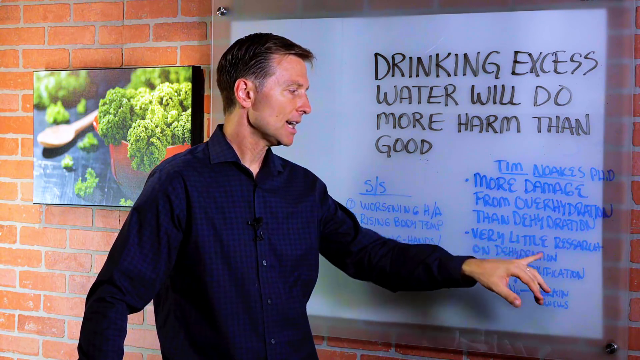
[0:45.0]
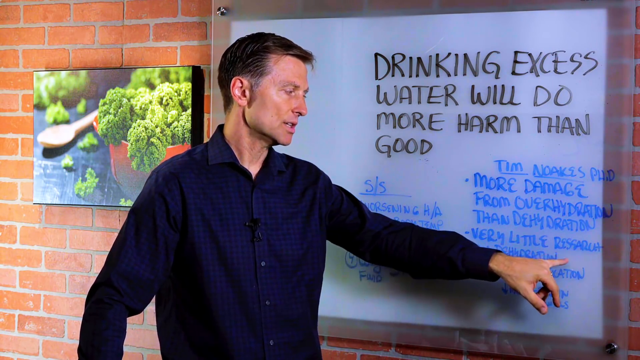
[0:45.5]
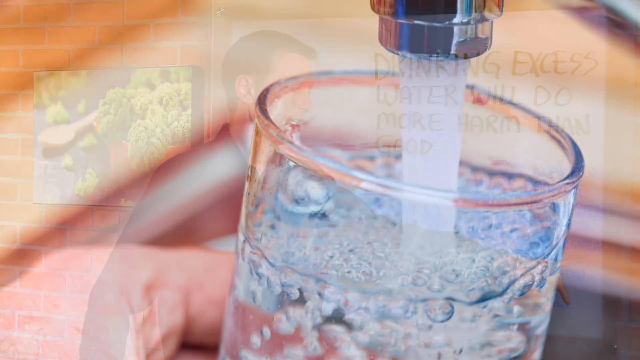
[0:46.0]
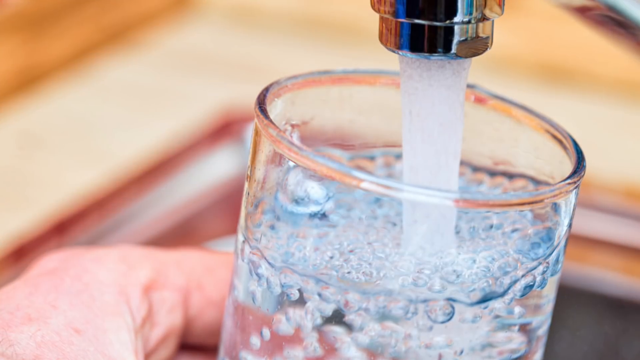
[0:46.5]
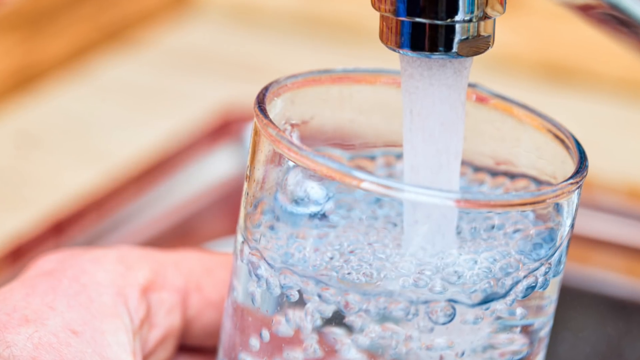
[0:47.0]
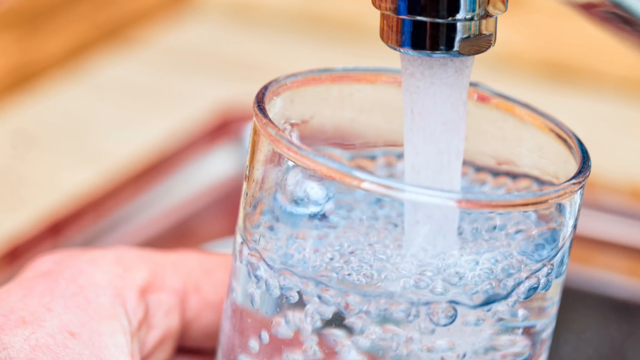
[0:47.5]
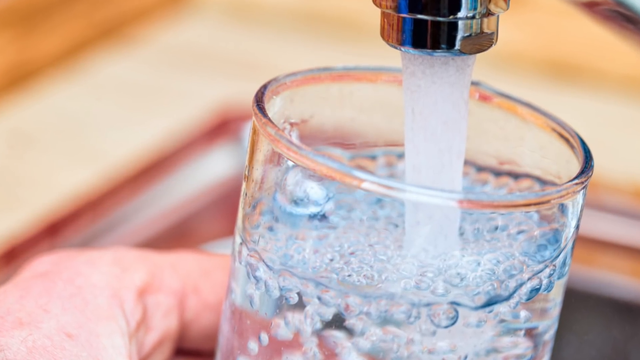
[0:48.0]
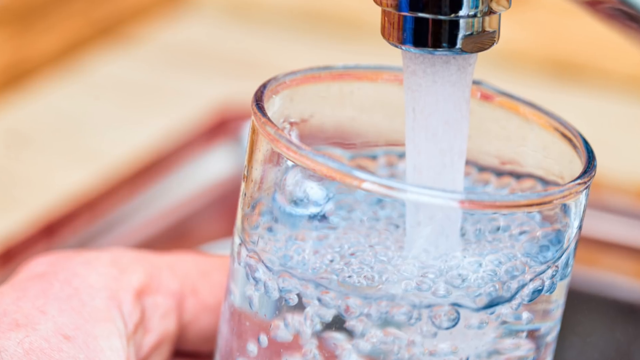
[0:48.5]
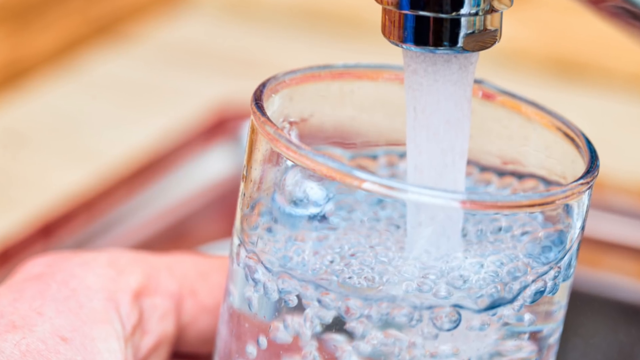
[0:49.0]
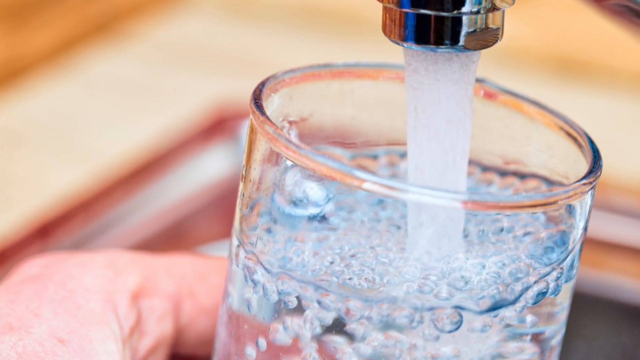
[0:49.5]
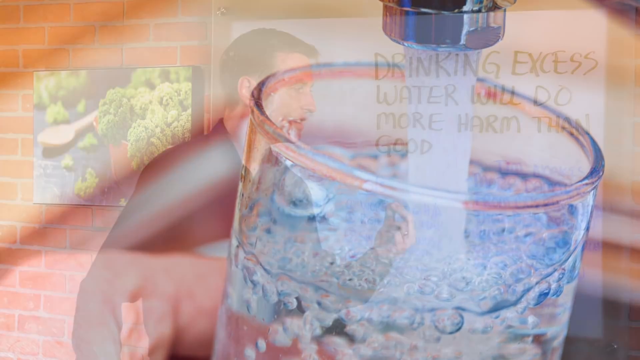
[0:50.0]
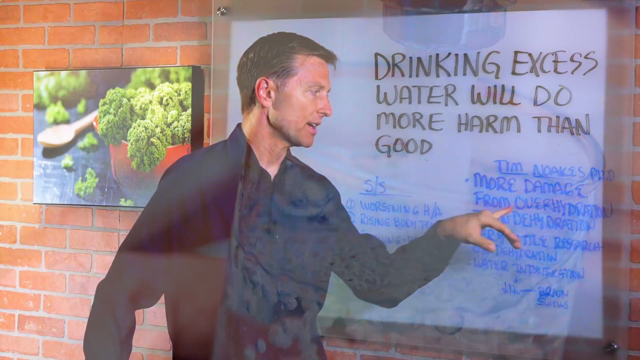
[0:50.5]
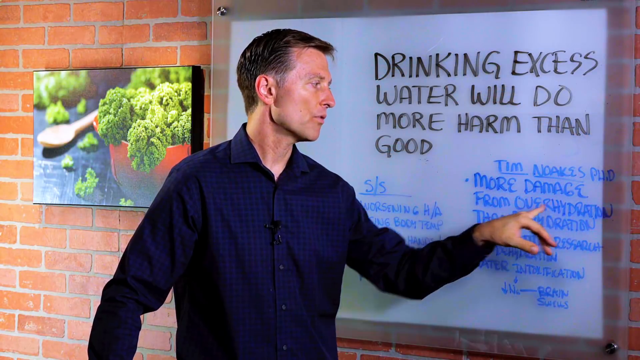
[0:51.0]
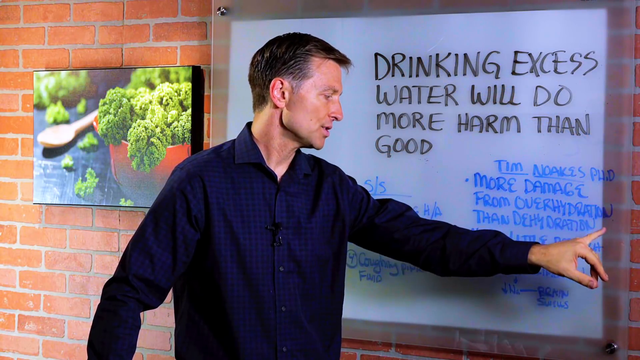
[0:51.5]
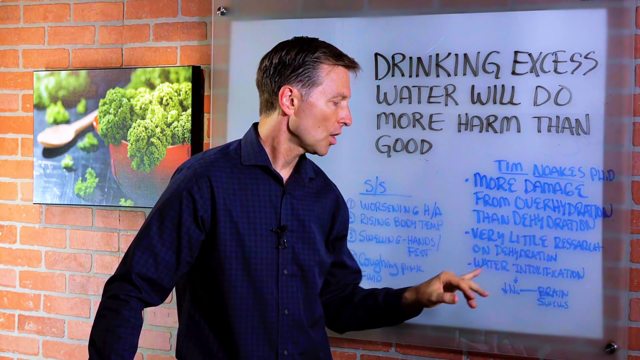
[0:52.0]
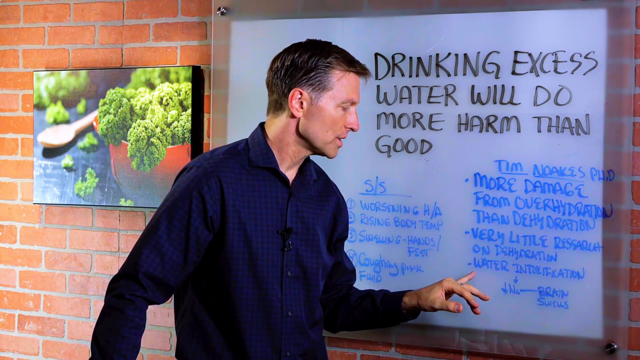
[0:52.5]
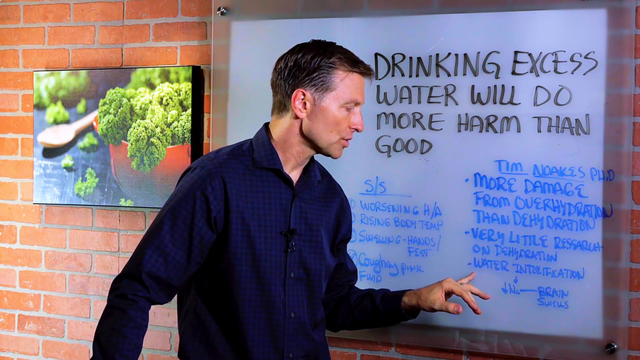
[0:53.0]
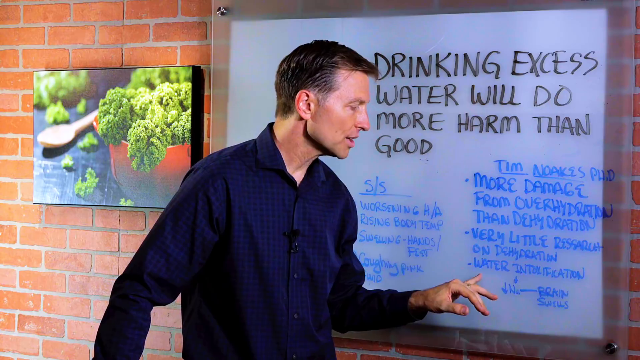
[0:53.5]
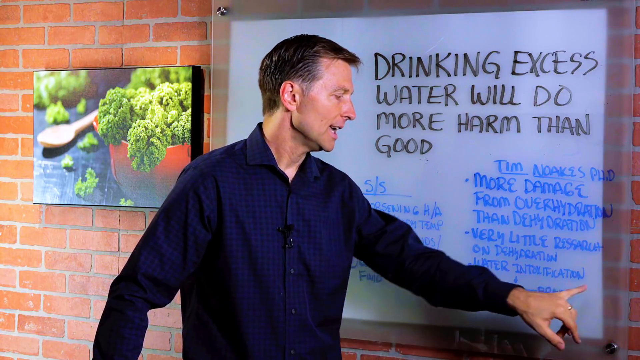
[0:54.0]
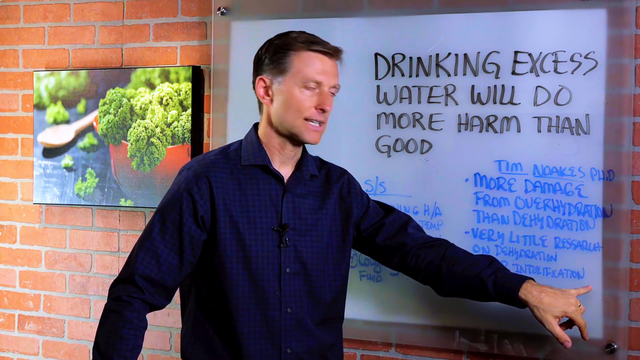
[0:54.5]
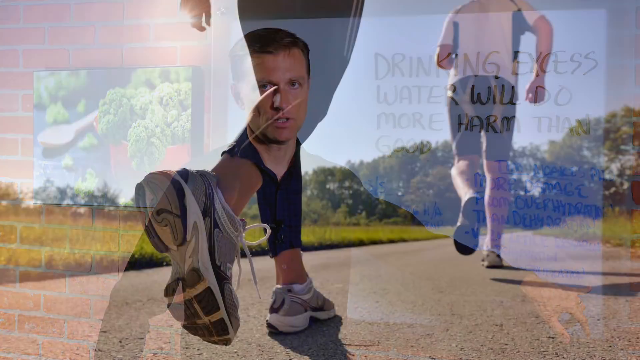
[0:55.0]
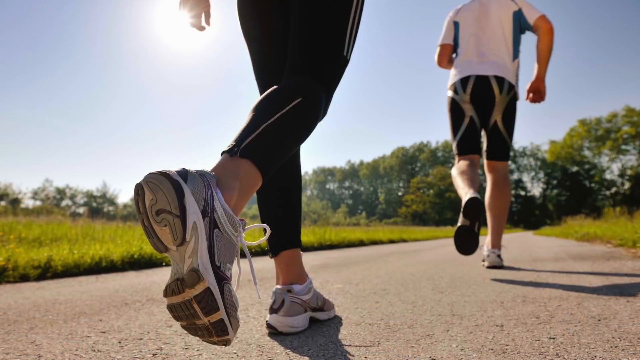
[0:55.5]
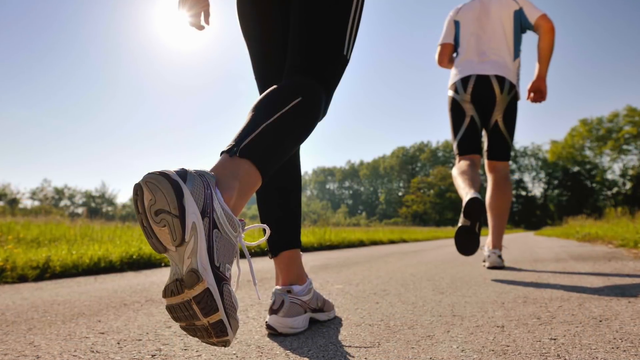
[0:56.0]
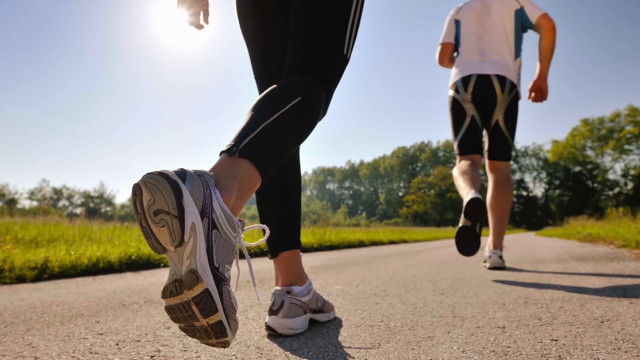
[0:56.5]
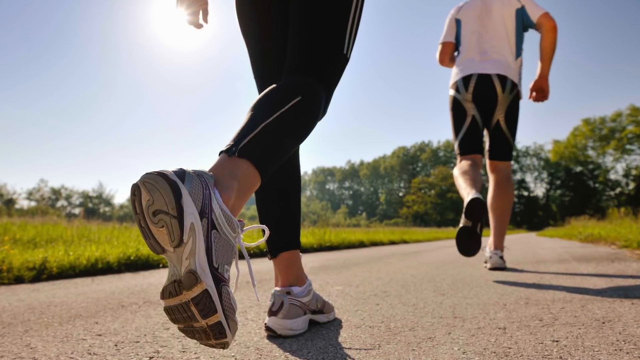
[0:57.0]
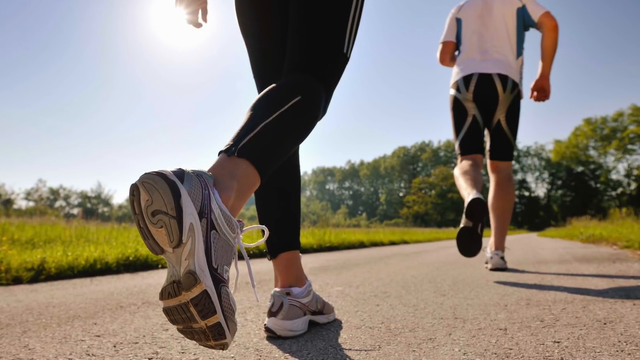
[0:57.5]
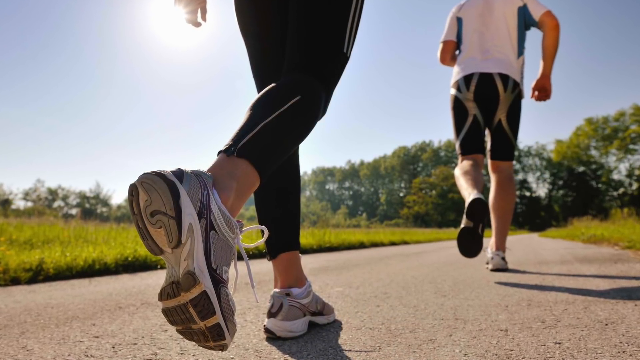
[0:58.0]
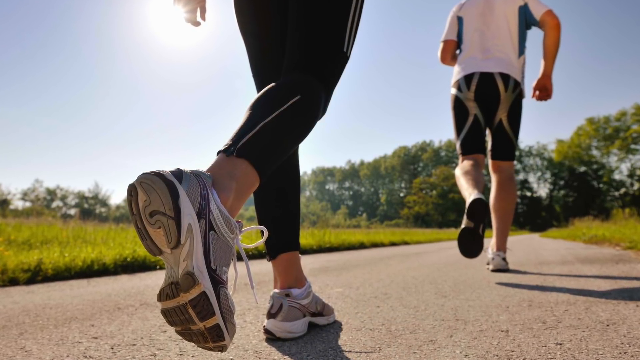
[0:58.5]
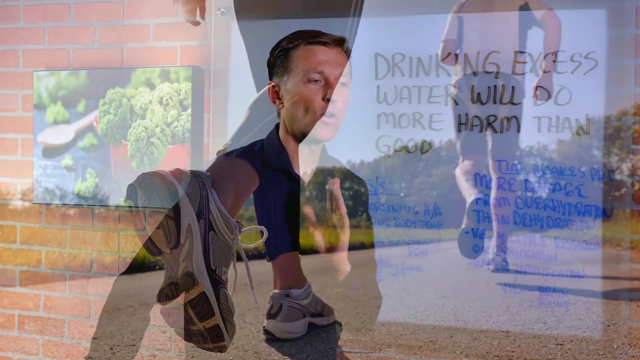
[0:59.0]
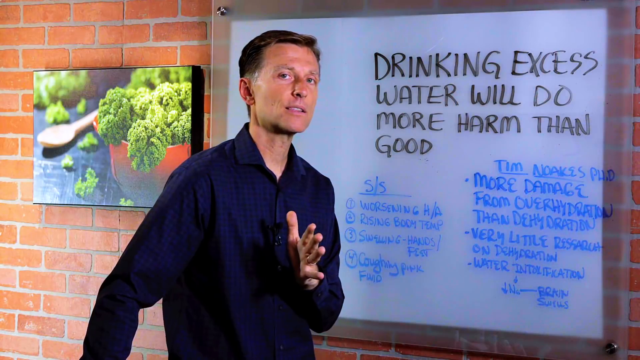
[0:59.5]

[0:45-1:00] The man points to the second point on the whiteboard, which appears to say "very little ressarut on dehydration." The scene switches to a still image of someone pouring water from a faucet into a glass cup; the stream of water has almost filled the glass to the top, with lots of bubbles inside, and a little of a person's hand holding the glass is visible. The video returns to the man, who points to the first point again, "more damage from over-hydration," and then moves down to point to the third point, "water intoxication." Another still image follows, showing what looks like two people jogging or walking, seen from a lower angle so only the bottoms of their legs and their feet are visible. It appears to be a man in black workout shorts with silver striped designs on the back and a white shirt, followed by a woman's legs in black workout pants and sneakers, running down a gray asphalt path. The video then returns to the man in front of the whiteboard.